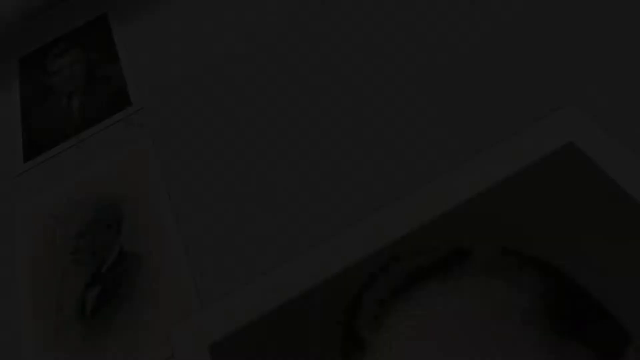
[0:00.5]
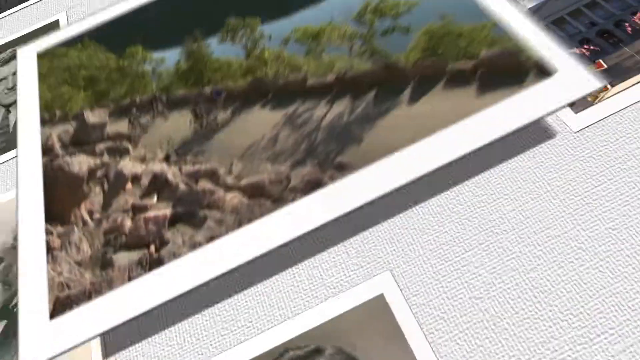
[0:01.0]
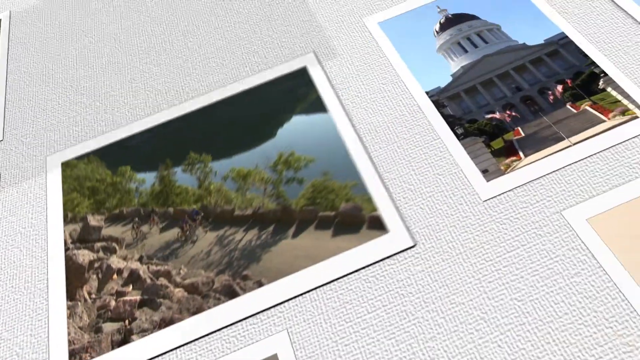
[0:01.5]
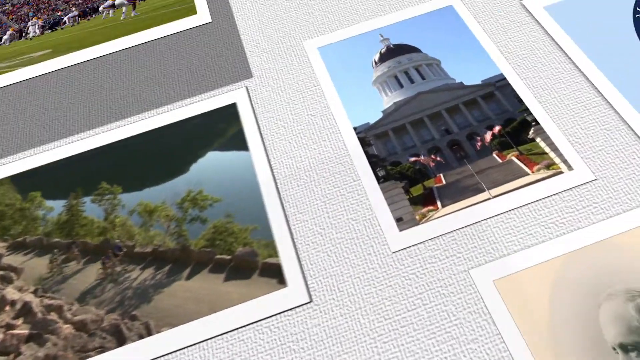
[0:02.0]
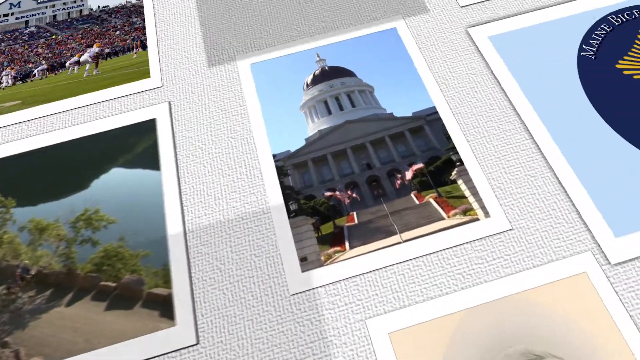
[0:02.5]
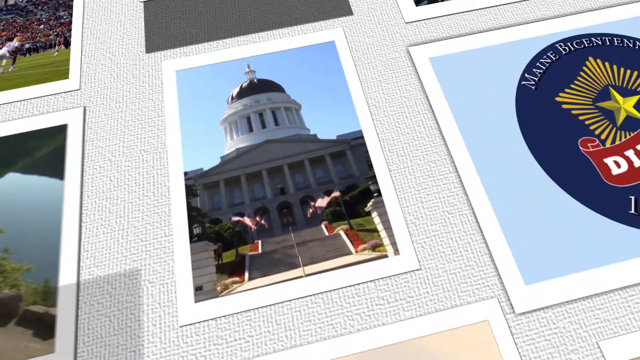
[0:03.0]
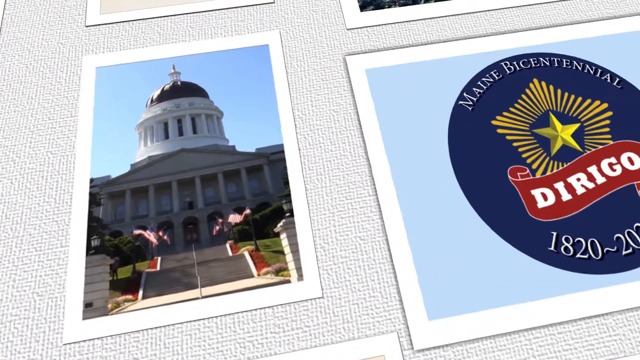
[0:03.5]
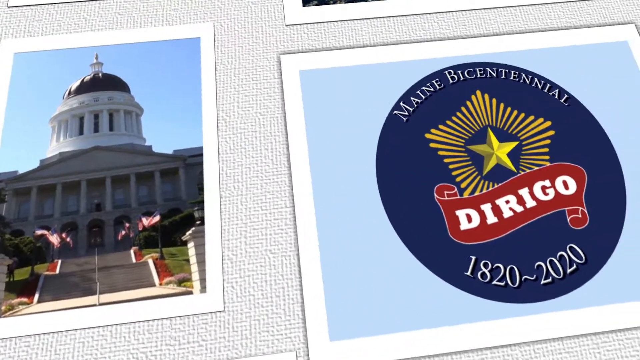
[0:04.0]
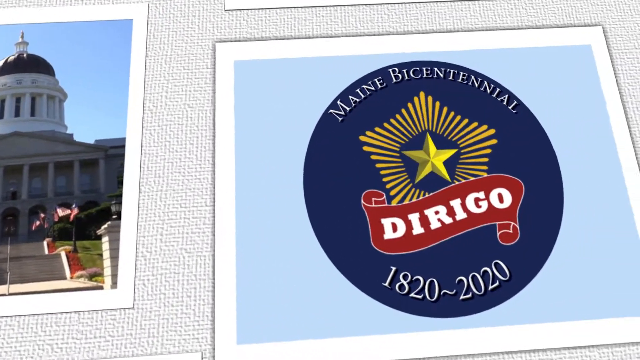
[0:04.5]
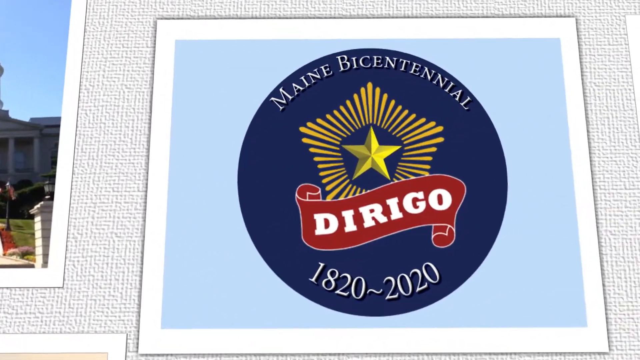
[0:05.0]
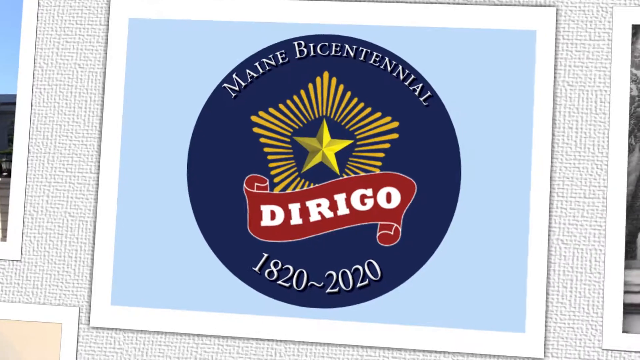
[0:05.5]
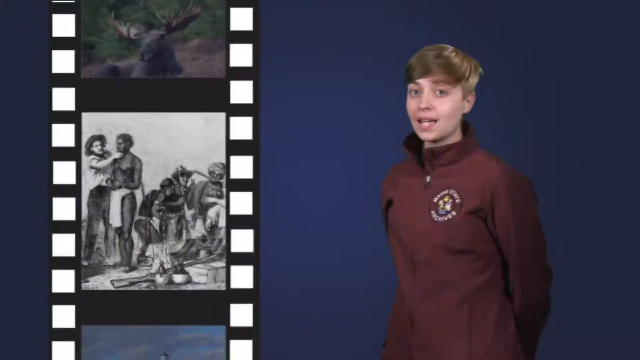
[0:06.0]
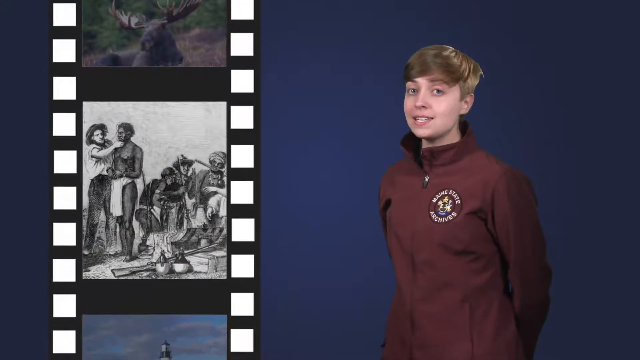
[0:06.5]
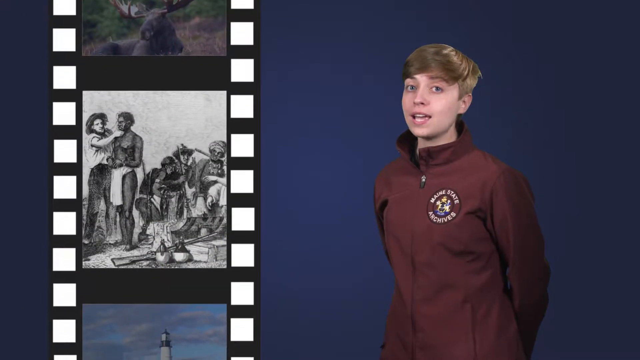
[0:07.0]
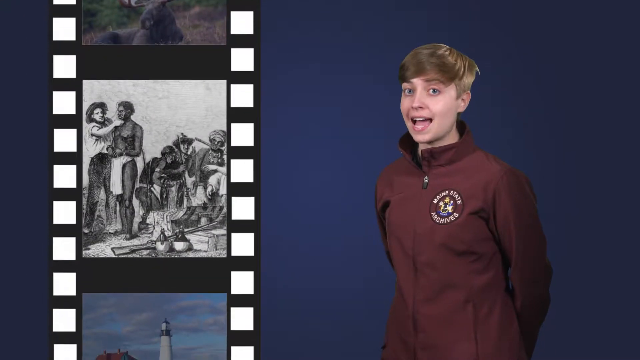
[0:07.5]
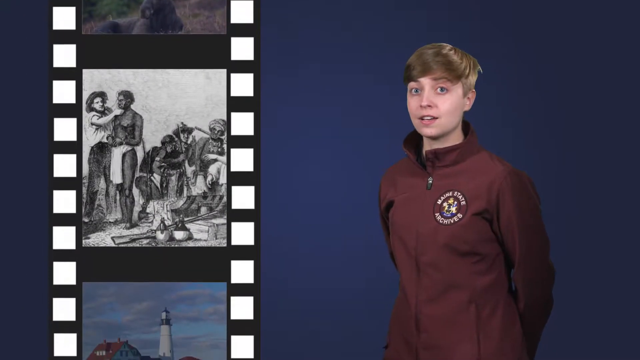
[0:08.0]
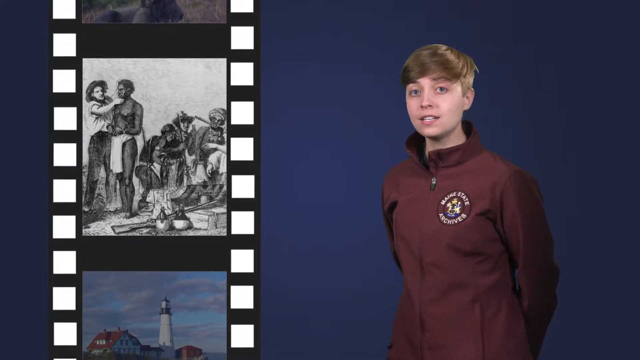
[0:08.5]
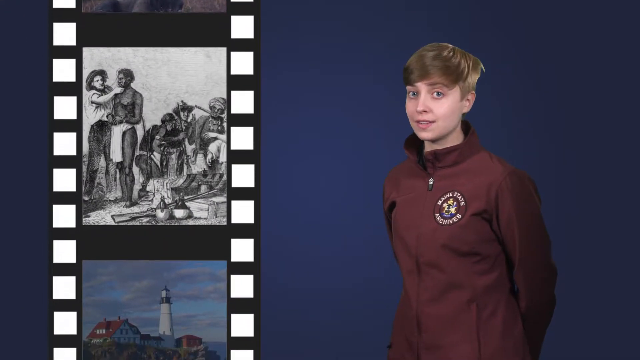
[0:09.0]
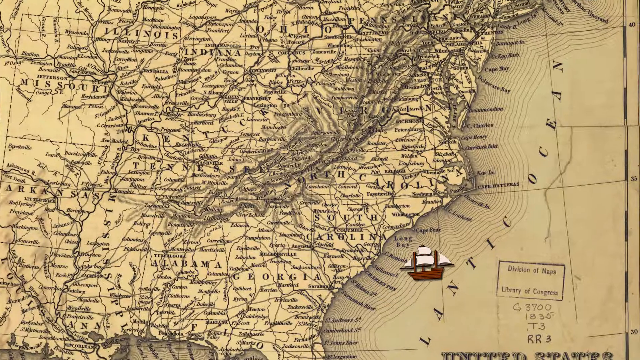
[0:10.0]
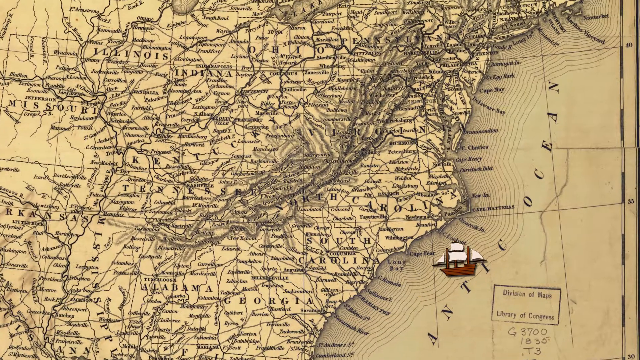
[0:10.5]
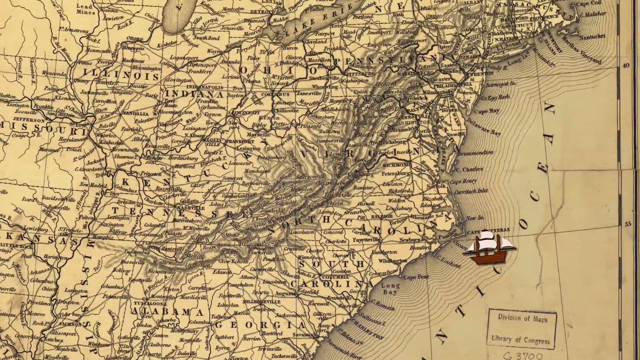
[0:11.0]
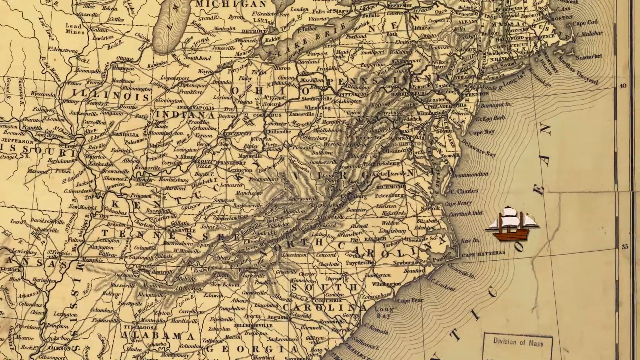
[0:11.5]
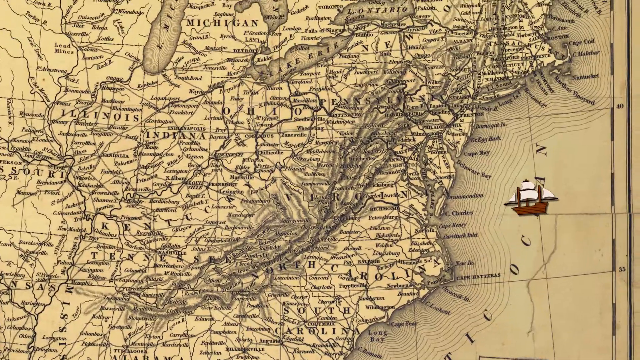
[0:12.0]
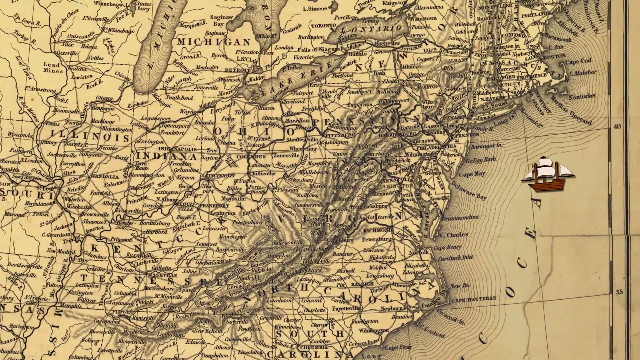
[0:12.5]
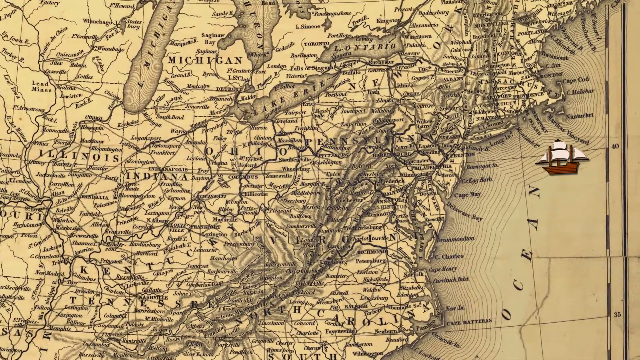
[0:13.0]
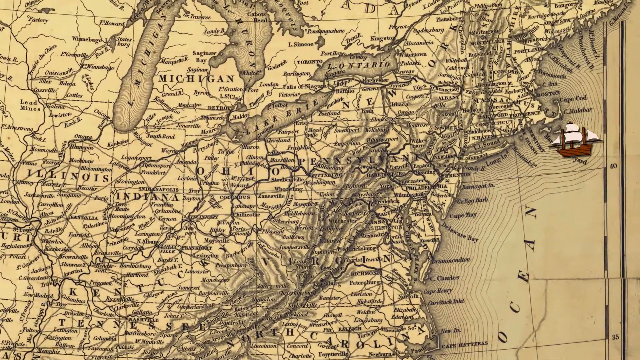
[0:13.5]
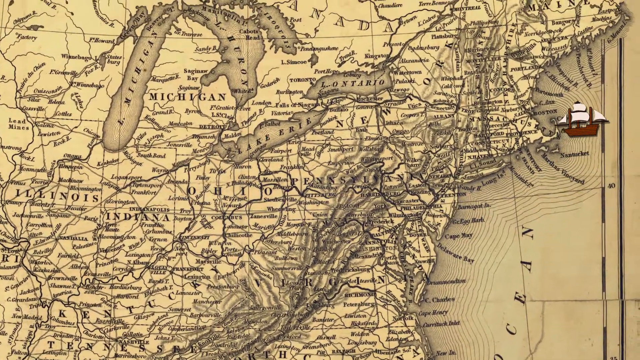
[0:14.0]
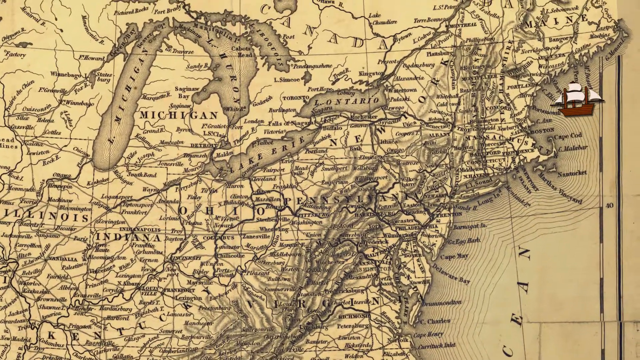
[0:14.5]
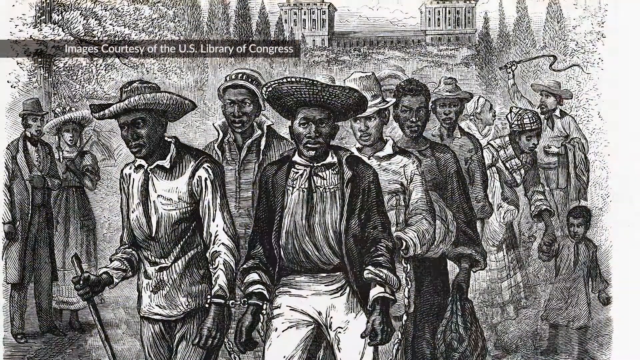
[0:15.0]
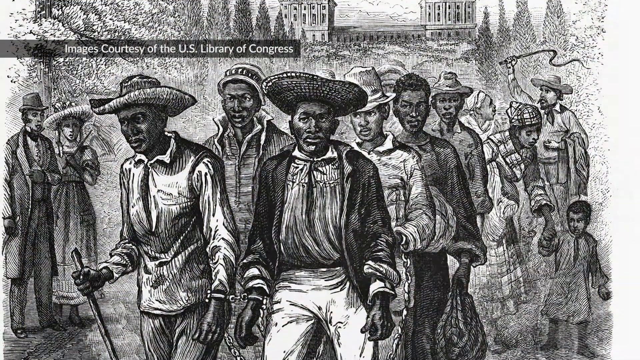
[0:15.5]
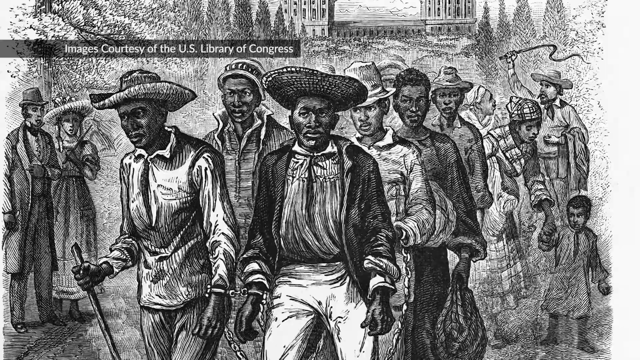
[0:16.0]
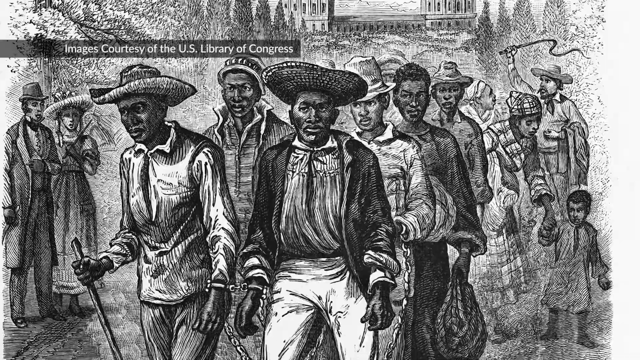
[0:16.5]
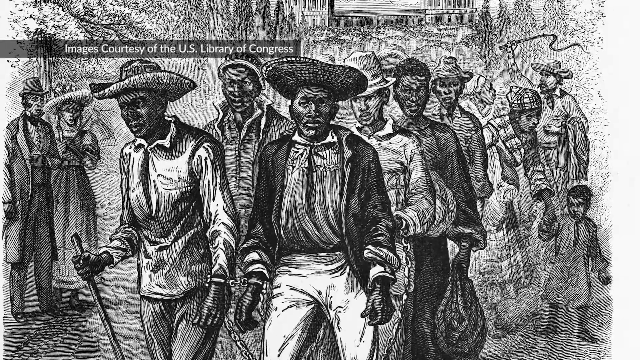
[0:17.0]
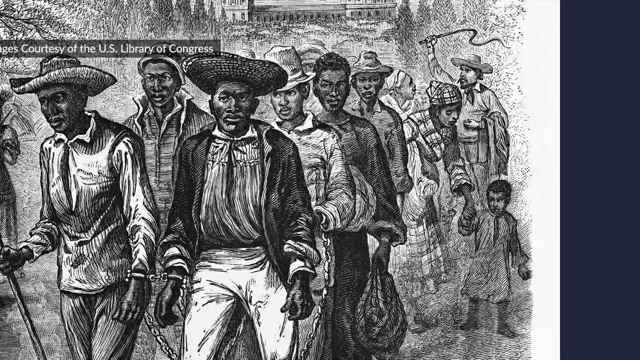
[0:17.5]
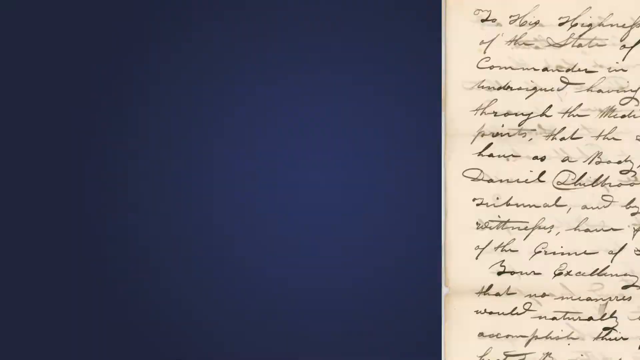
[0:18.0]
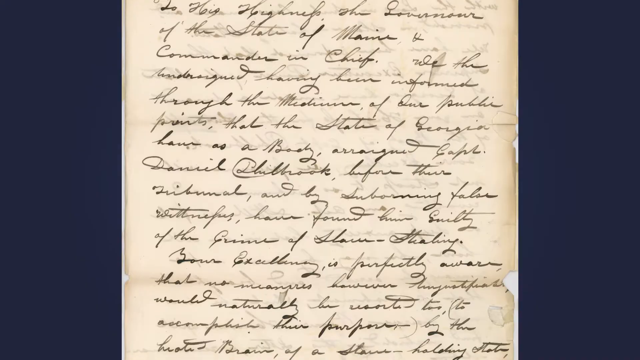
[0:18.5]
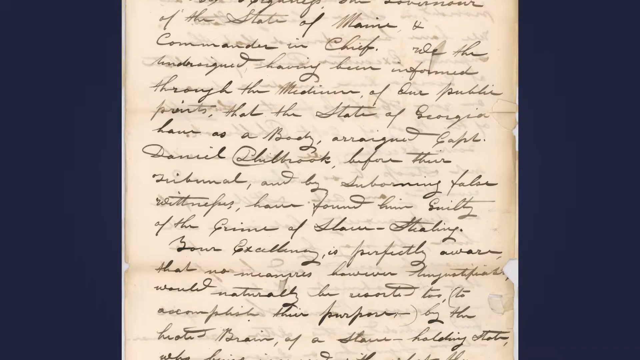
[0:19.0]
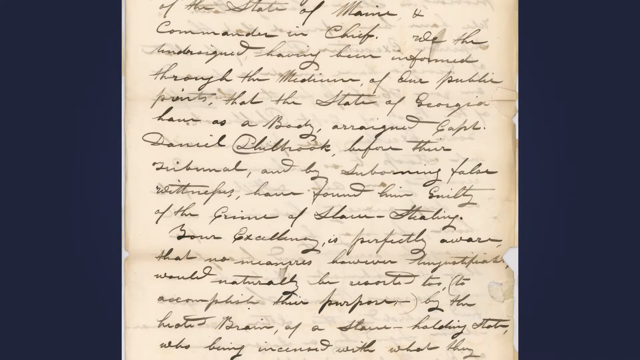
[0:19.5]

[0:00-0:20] The video fades in from a black screen to an animation of a series of Polaroids being placed into a photo album as an opening scene, focusing on a logo of the bicentennial event spanning from 1820 to 2020: a star surrounded by a bunch of lines that form a bigger star around it. The animation cuts away to a series of photos on the left of the scene moving from the bottom to the top of the visible area, as if part of a film grain, alongside a young person, probably a student, wearing a red jacket with what seems to be a school logo on the right chest area, speaking and probably explaining the photos. The scene transitions to an old, sepia-looking map with an animation of a small boat sailing from the southern area of the right side of the landmass to the top right northern area of the same landmass. Next comes a hand-drawn drawing, probably from the historical period, from the Library of Congress, showing a number of black slaves being herded through some sort of field by a white man in a cowboy hat brandishing a whip in the background at the right. The scene then transitions to a document with cursive handwriting.